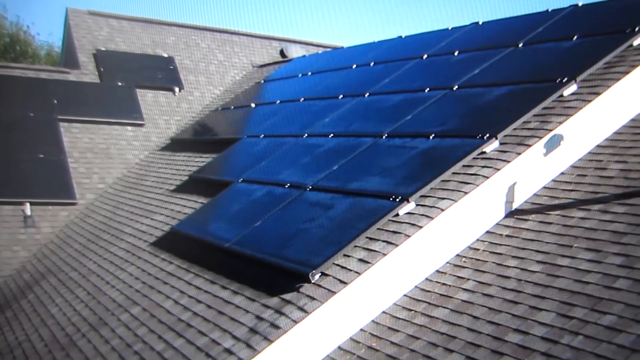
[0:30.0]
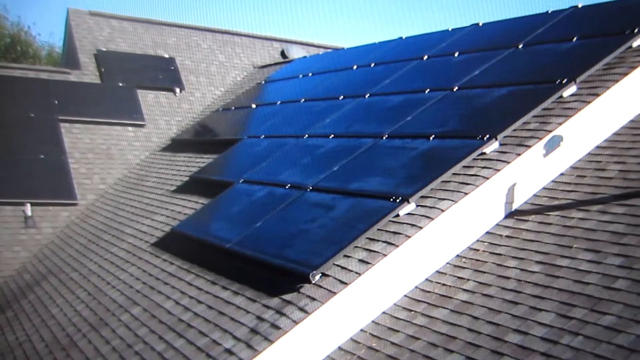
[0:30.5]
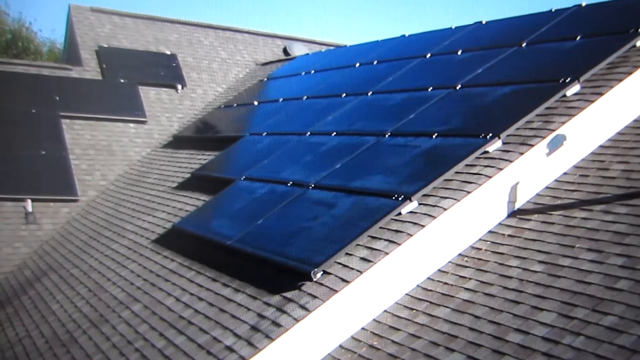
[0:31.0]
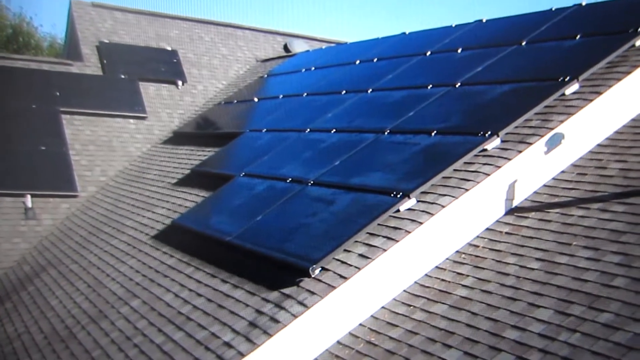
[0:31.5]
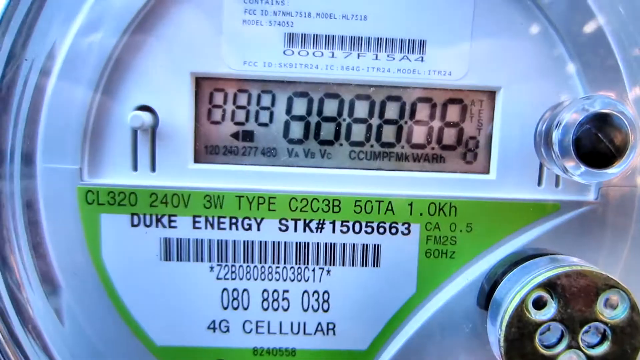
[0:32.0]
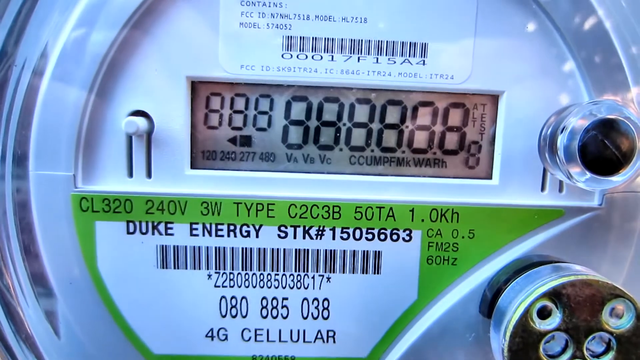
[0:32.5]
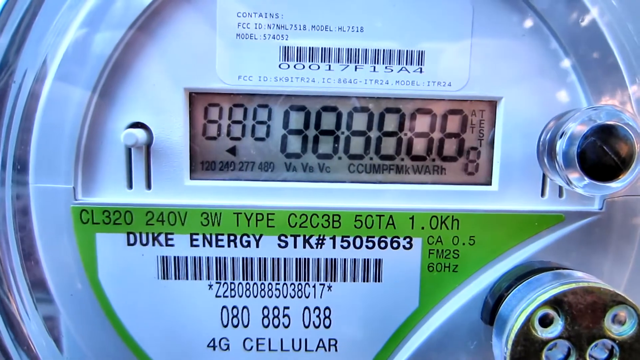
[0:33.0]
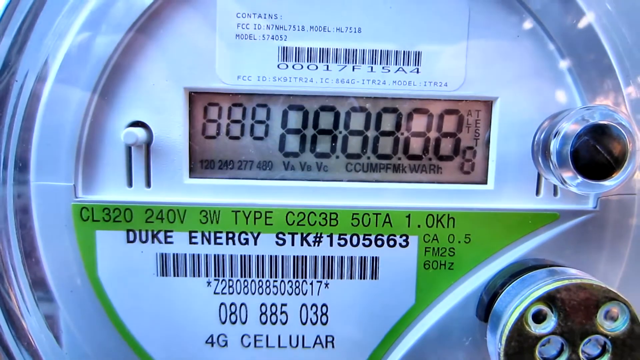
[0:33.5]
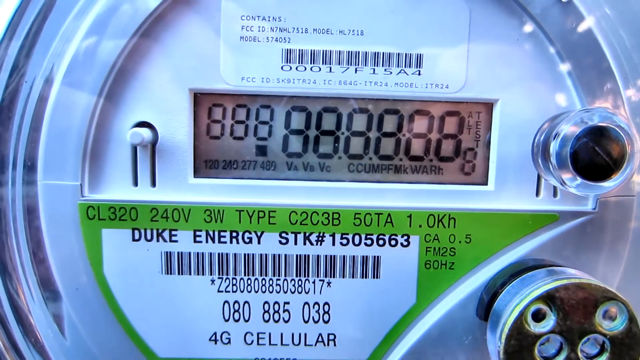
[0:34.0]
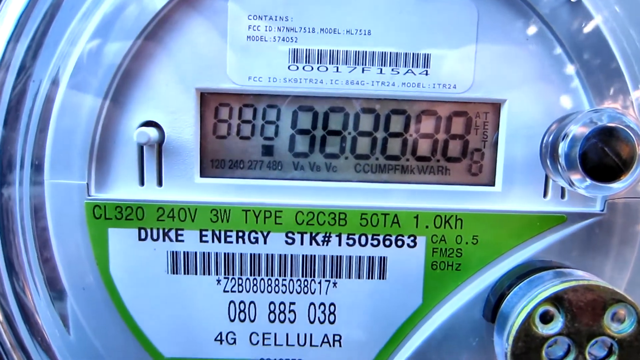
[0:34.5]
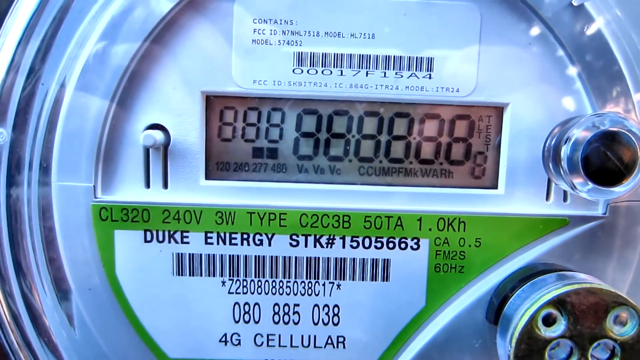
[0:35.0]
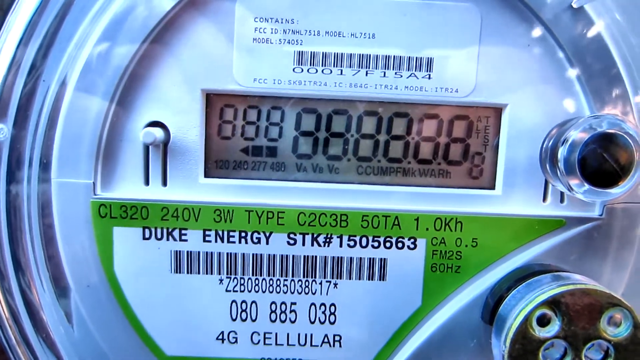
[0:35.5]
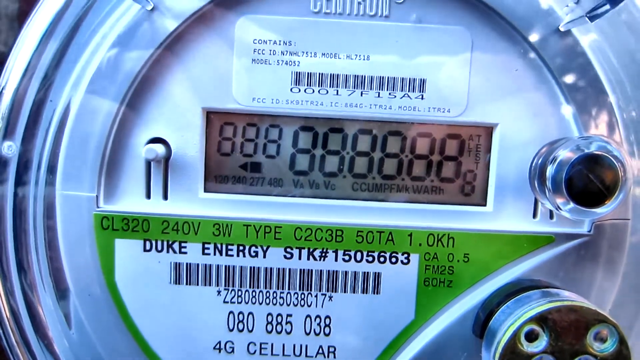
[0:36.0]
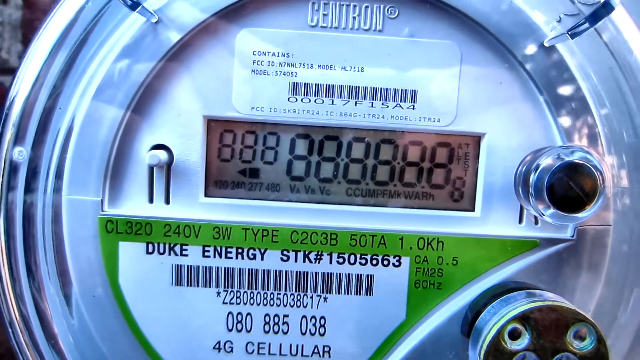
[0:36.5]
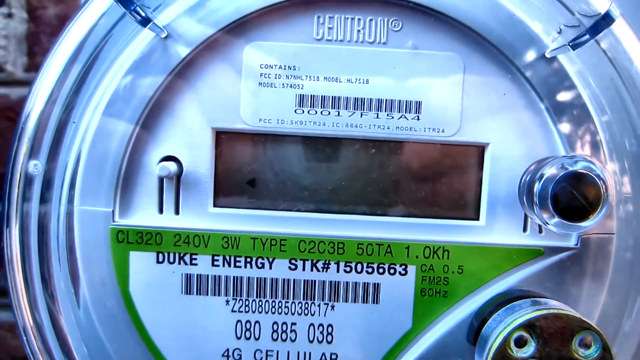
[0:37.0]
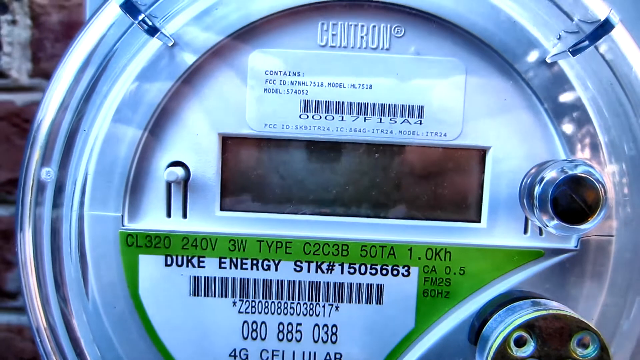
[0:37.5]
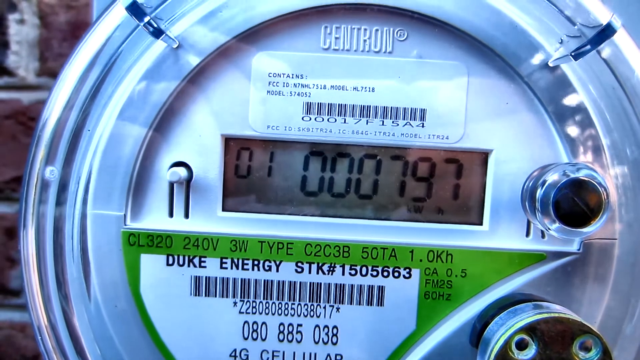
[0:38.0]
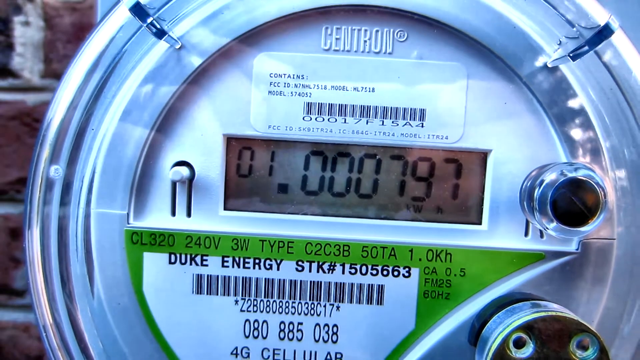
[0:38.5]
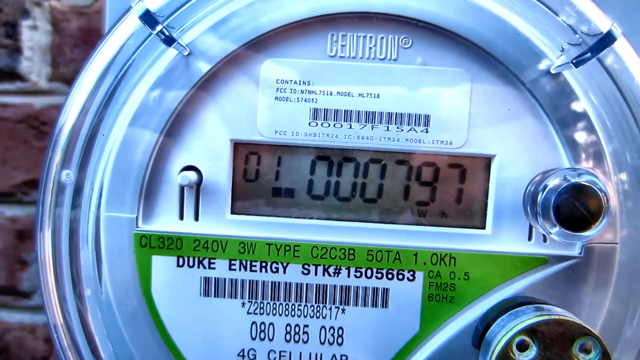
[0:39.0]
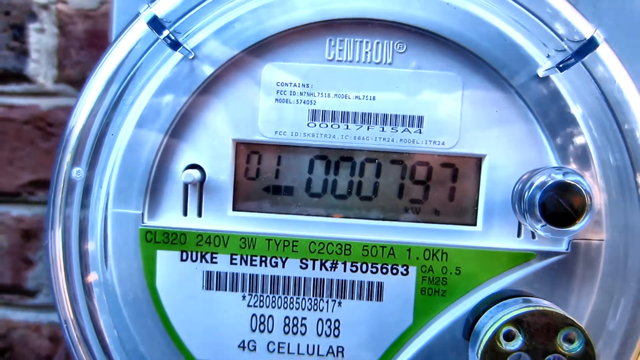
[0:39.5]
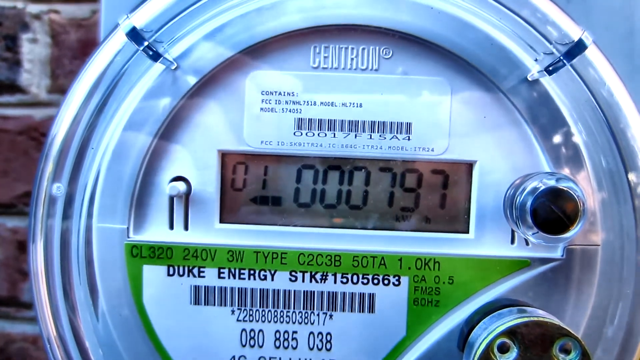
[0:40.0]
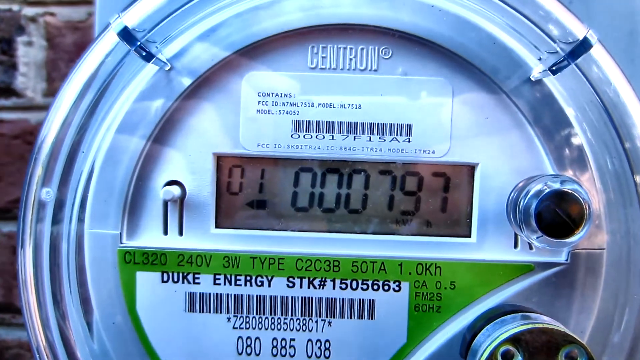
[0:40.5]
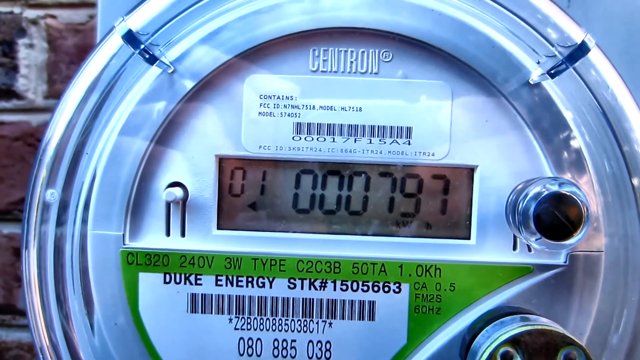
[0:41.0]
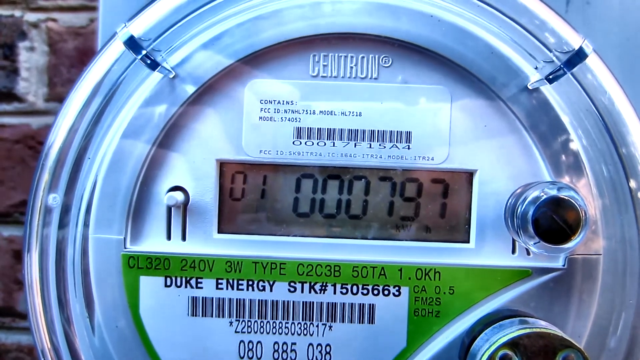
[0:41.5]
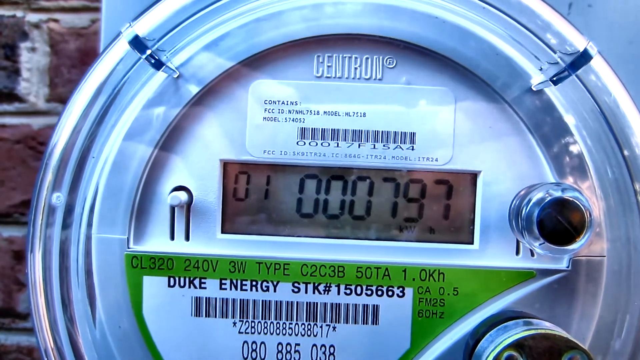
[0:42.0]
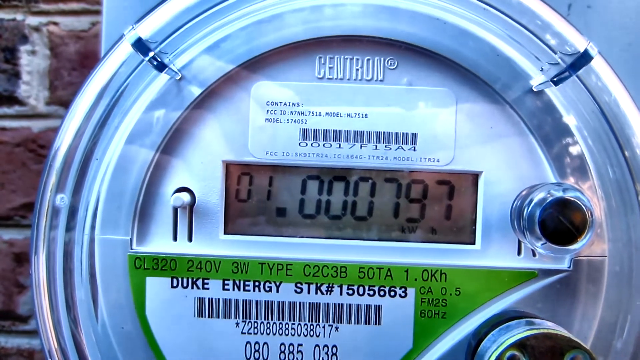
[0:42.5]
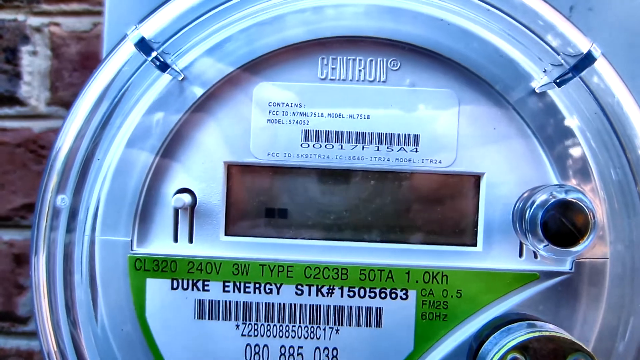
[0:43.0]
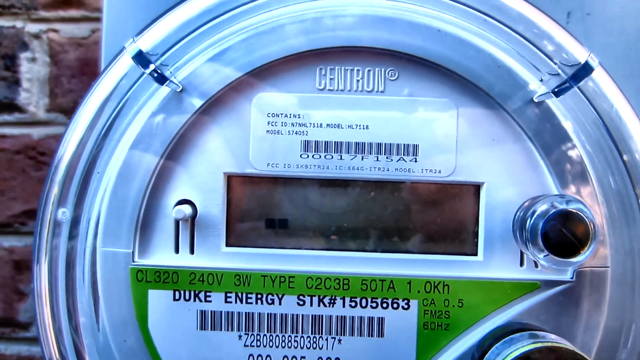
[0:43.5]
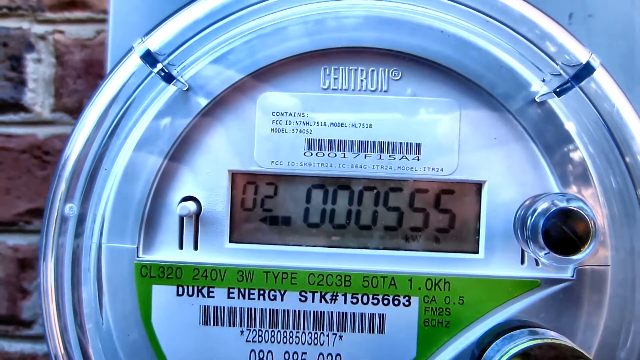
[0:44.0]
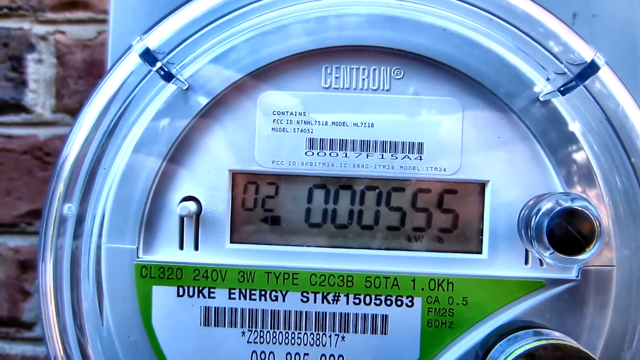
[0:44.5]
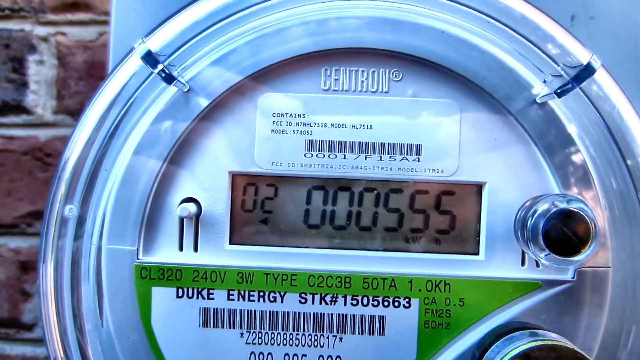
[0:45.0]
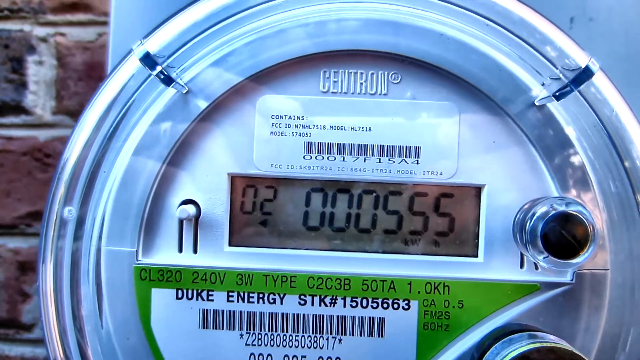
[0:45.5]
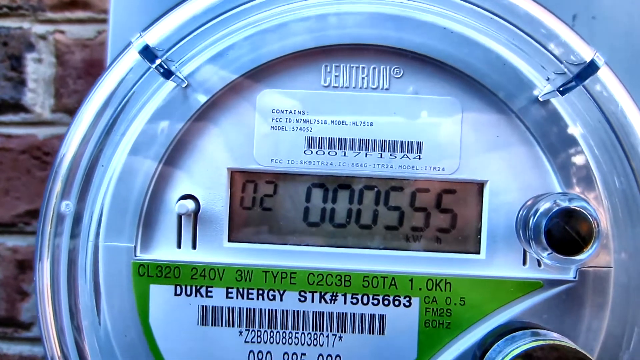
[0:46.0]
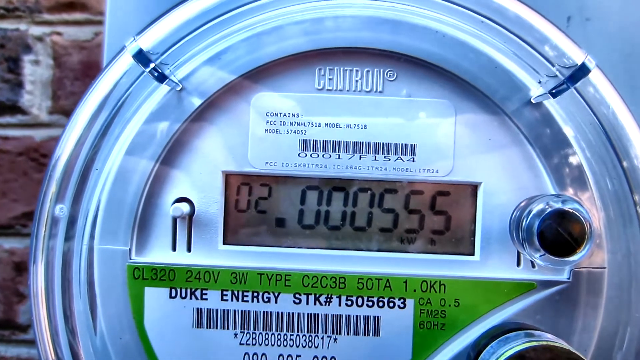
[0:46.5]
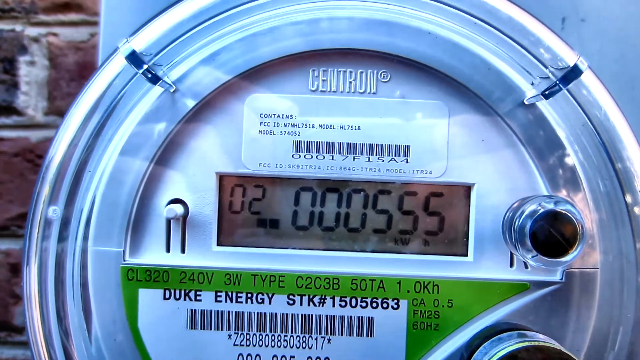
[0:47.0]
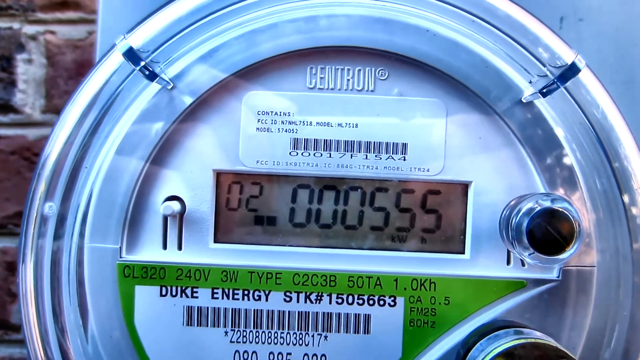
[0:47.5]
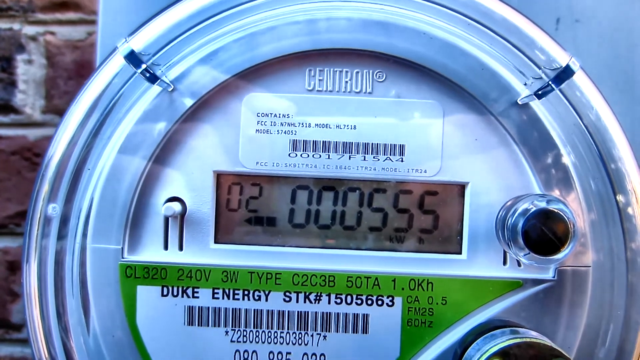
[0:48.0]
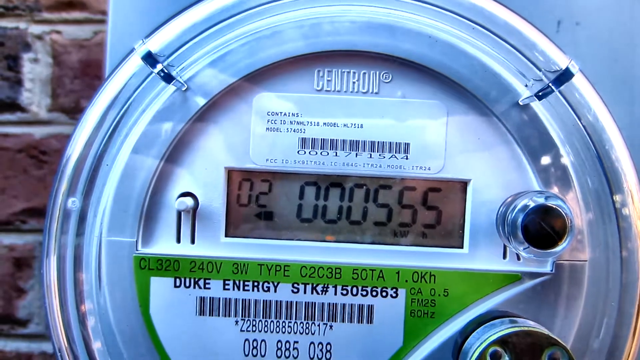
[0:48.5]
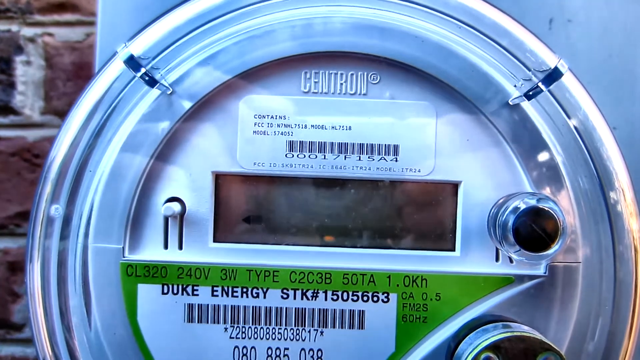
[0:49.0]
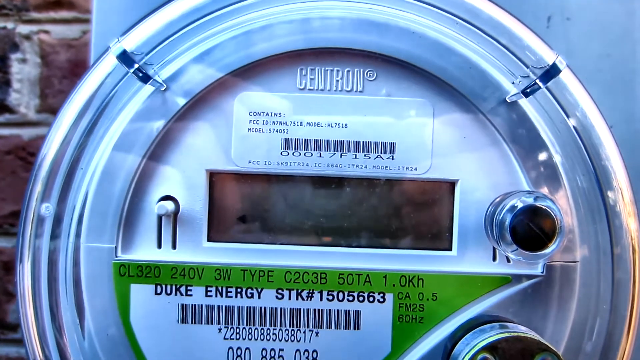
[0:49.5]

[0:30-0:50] The scene changes from the roof to an energy reader or meter of some kind. It says "Duke energy" on it, followed by "STK #1505663", with a barcode underneath. This part is in white, and surrounding it in green are markings including "240" volts, "3W", "type c2c3b", "50 ta" and "1.0 k". Above that is a long rectangle with flashing numbers resembling a stopwatch display; it goes blank, then comes back on showing different numbers, apparently kilowatt hours.